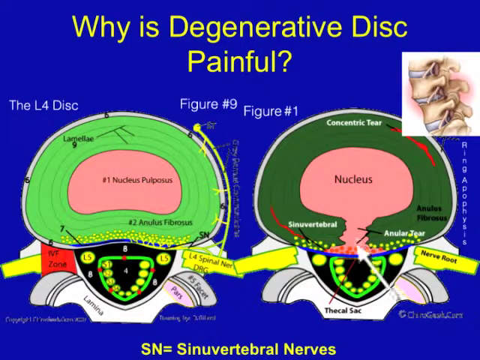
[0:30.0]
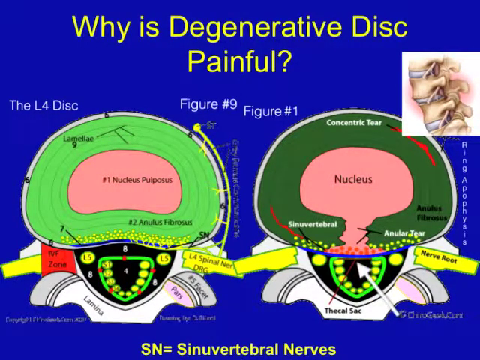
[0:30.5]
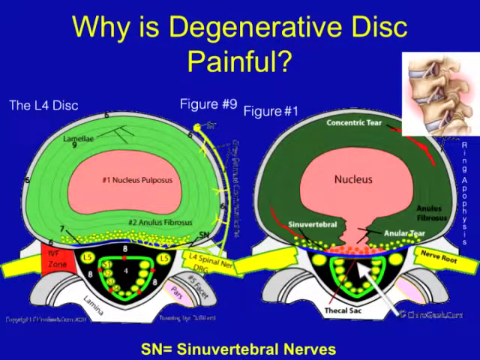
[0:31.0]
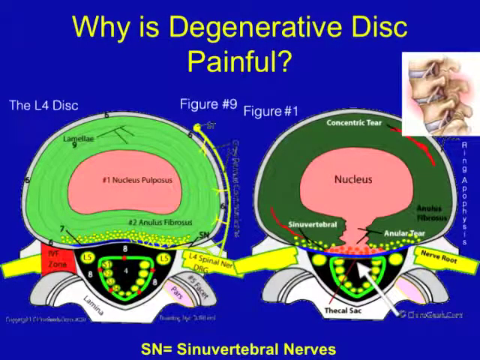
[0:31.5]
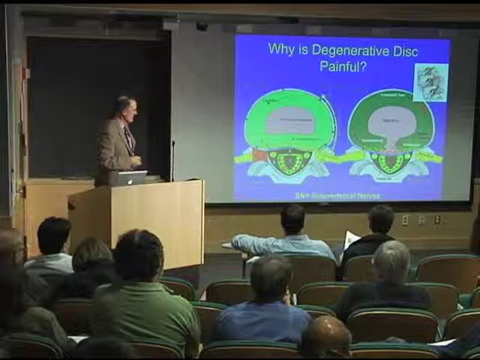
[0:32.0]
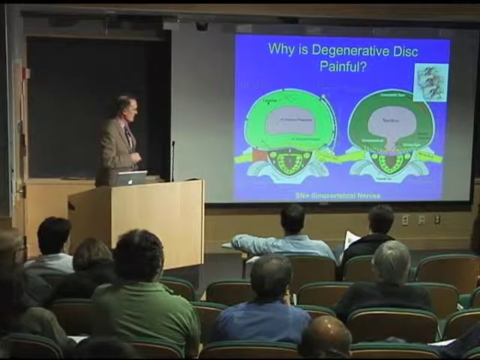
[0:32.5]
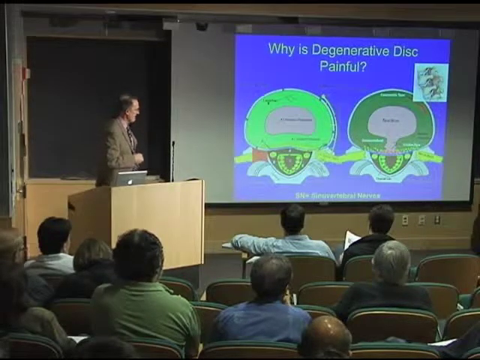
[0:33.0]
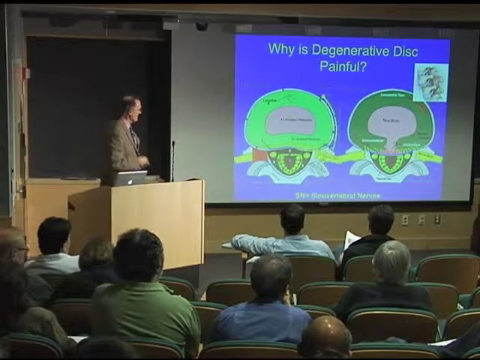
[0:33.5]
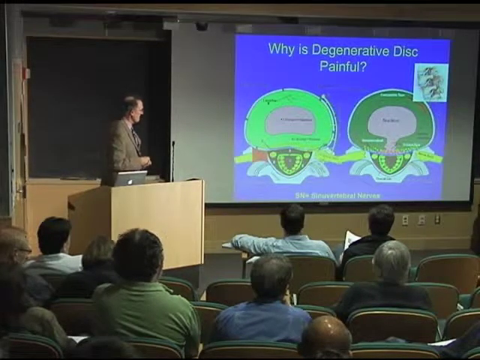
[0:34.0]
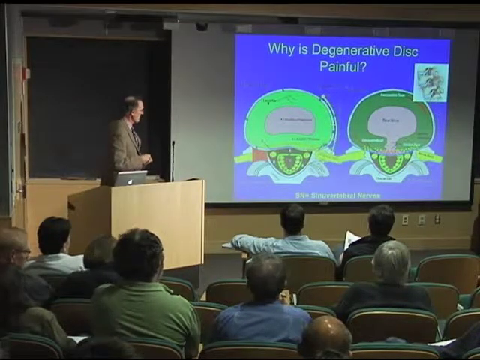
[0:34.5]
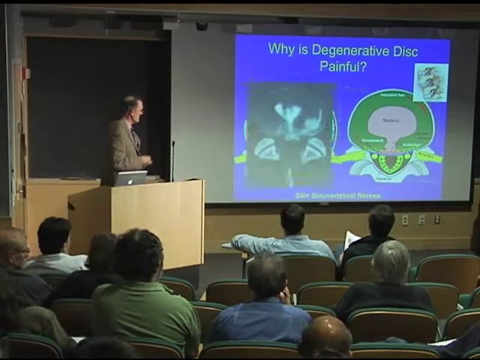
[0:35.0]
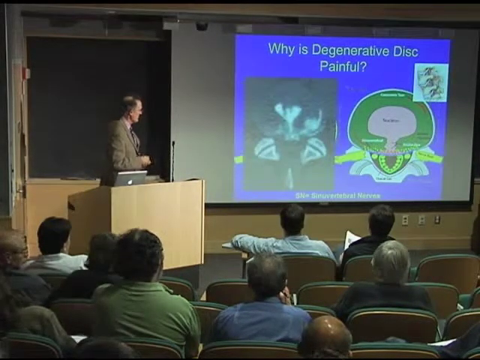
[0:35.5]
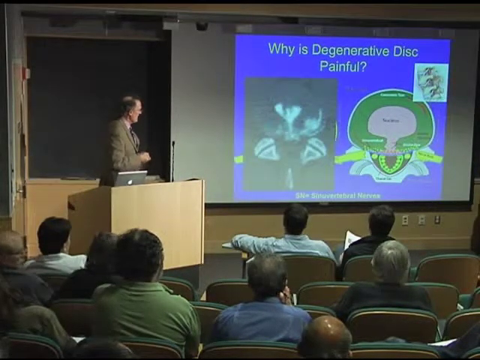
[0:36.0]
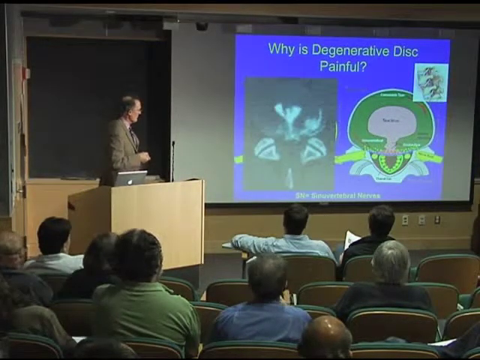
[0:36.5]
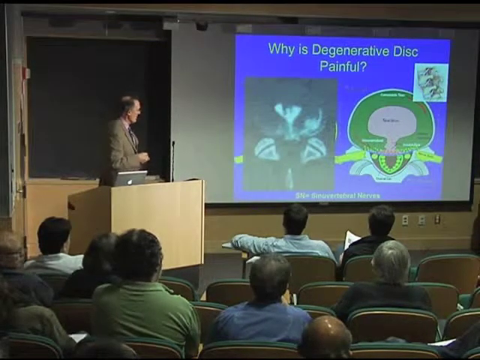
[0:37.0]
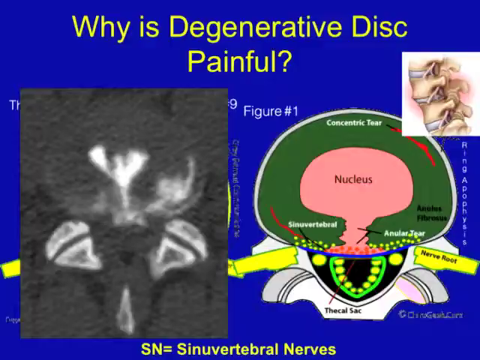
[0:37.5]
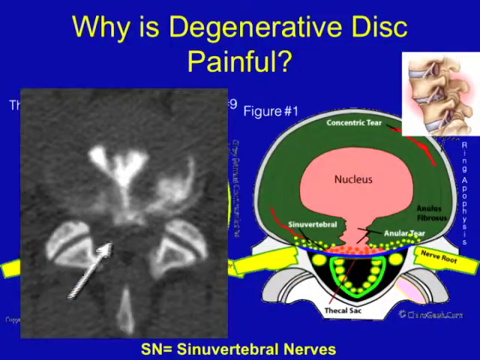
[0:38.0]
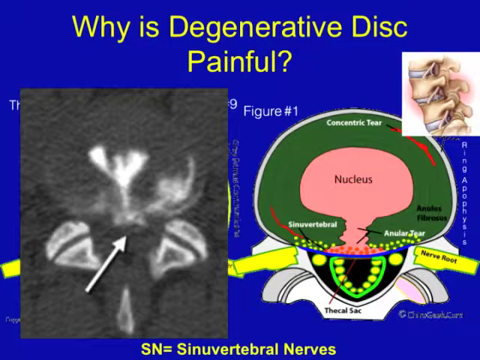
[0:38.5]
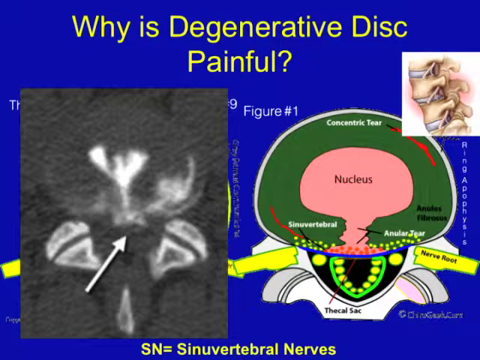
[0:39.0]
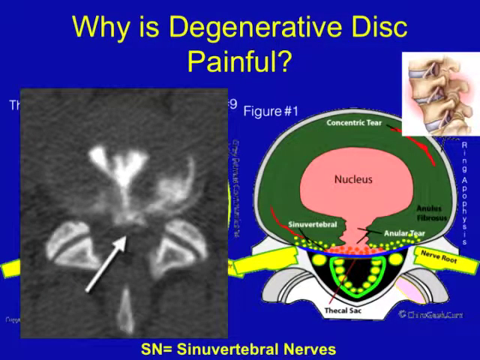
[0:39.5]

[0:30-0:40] A picture with a blue background shows figure nine and figure one in its top right-hand corner; it is on a screen, like a slide show. A picture of multiple discs in the spine follows, with three of them countable. The picture then fades to a man at a podium holding a clicker in his right hand; his hand moves up and down as he clicks. The screen then shows a grayed-out area with an arrow made of a long line and a pointed tip at the top, pointing into a grayed-out box. There are multiple white areas at the top, two small white areas on each side and another white area at the bottom, all on a gray background. The view then returns to the one seen at the beginning.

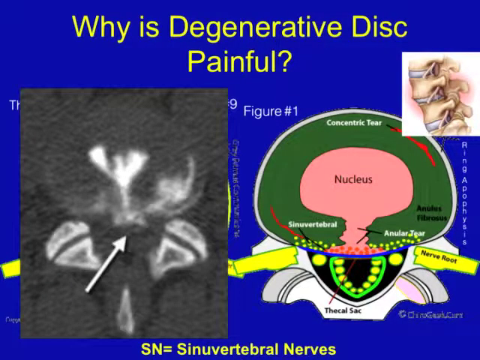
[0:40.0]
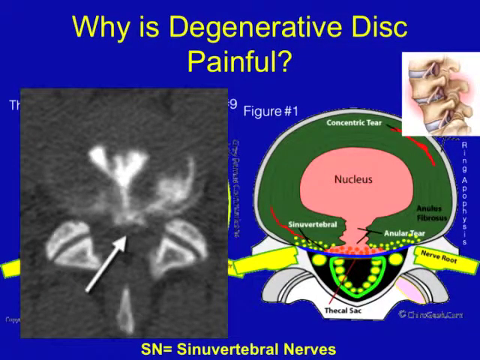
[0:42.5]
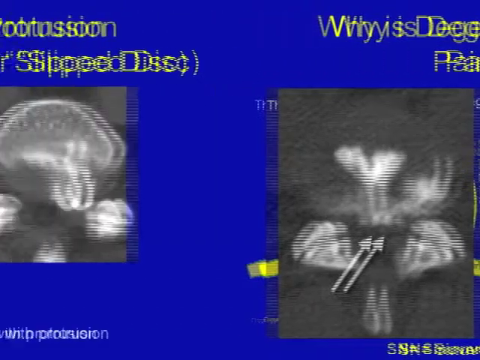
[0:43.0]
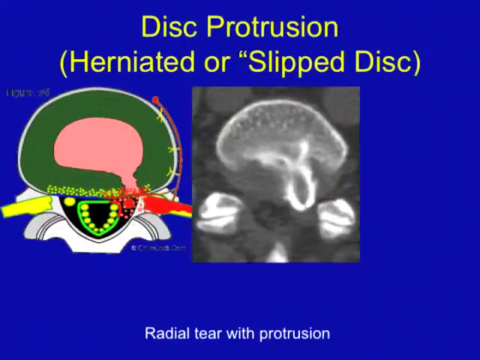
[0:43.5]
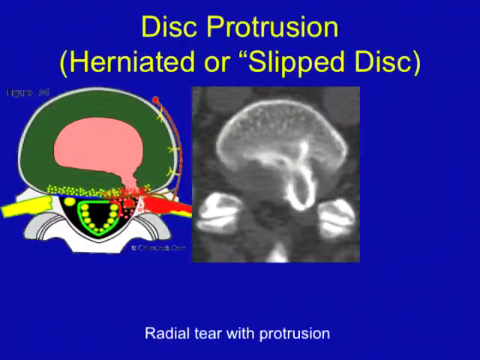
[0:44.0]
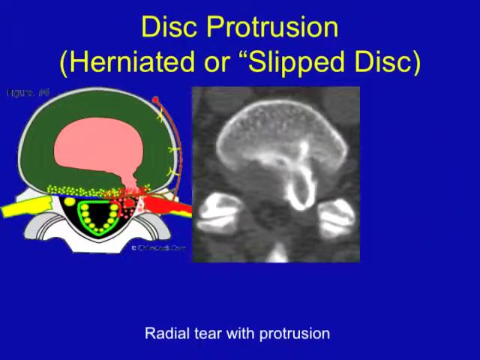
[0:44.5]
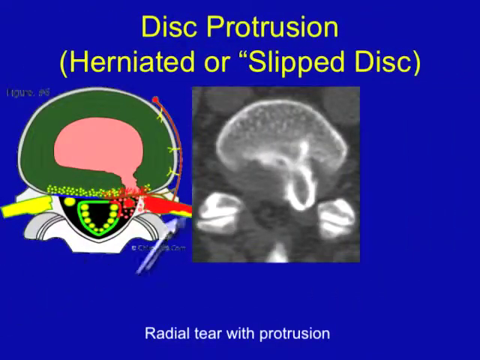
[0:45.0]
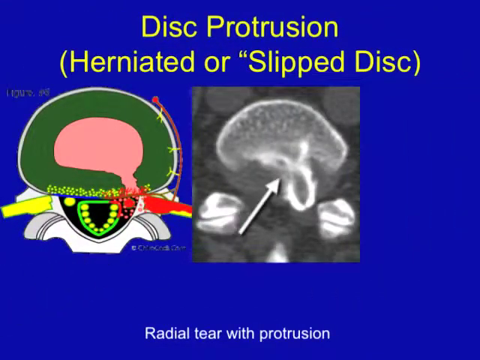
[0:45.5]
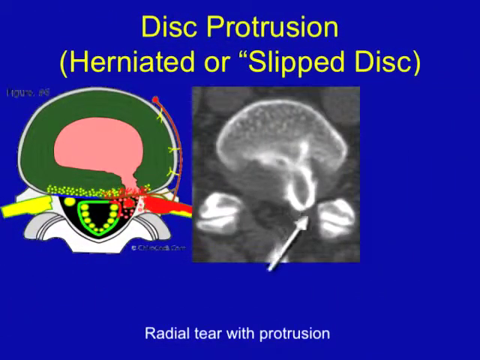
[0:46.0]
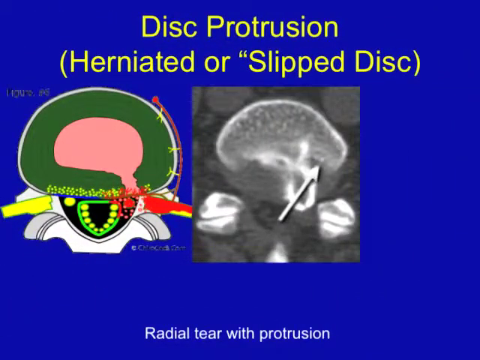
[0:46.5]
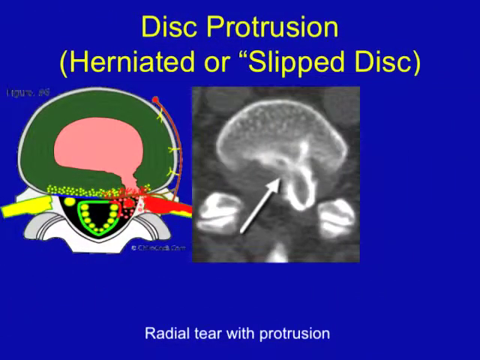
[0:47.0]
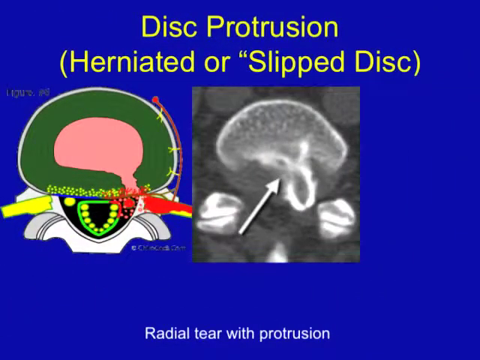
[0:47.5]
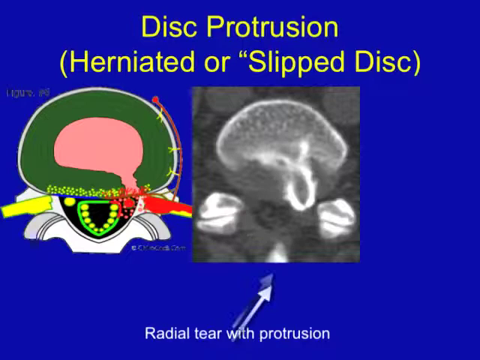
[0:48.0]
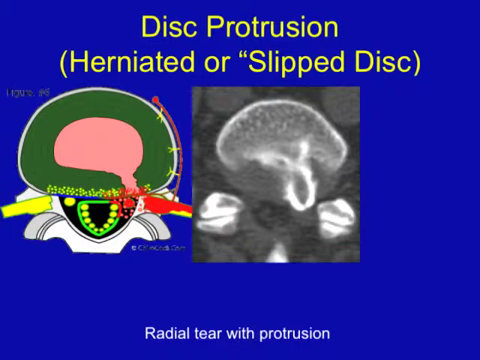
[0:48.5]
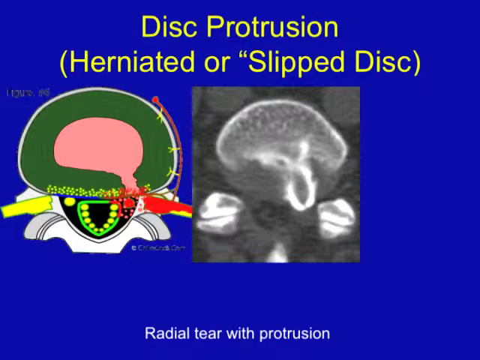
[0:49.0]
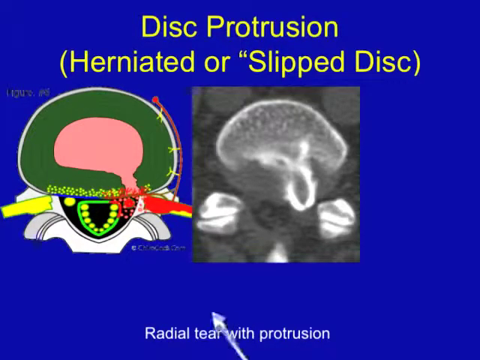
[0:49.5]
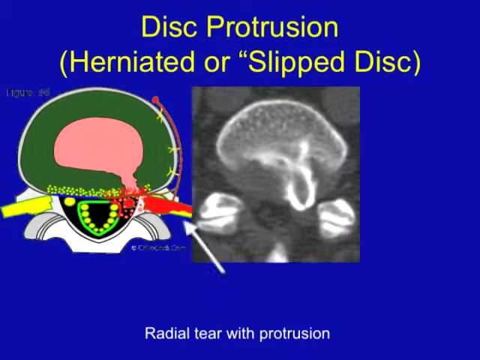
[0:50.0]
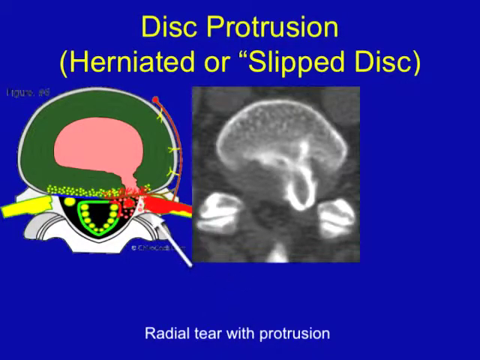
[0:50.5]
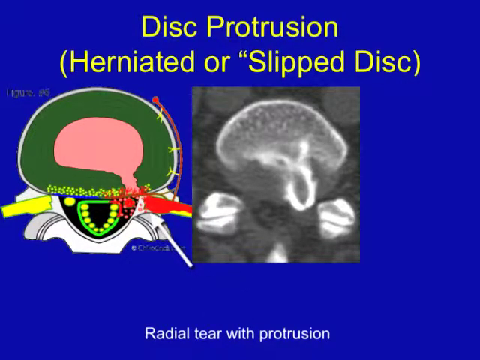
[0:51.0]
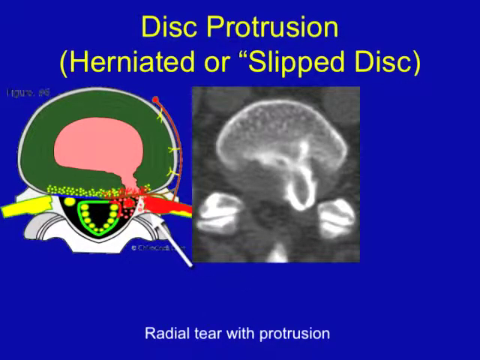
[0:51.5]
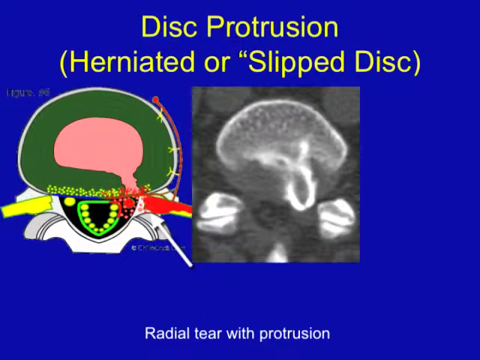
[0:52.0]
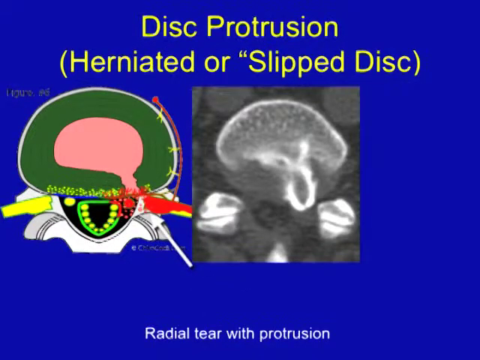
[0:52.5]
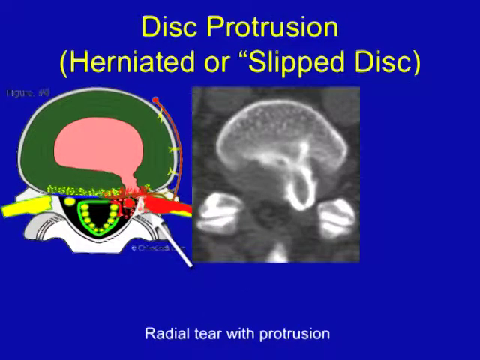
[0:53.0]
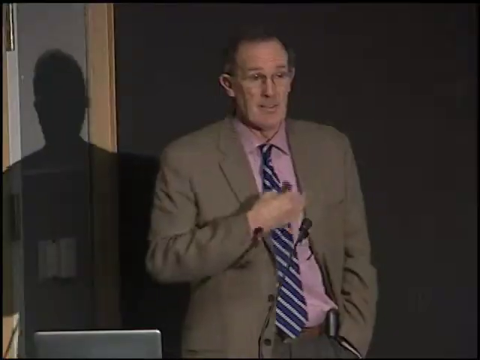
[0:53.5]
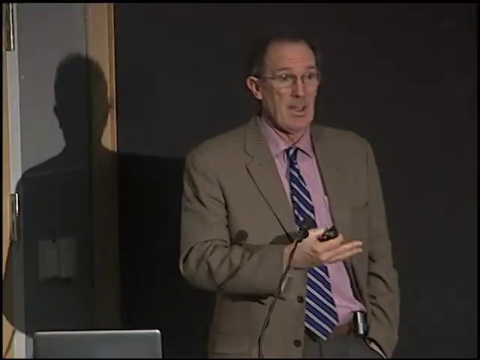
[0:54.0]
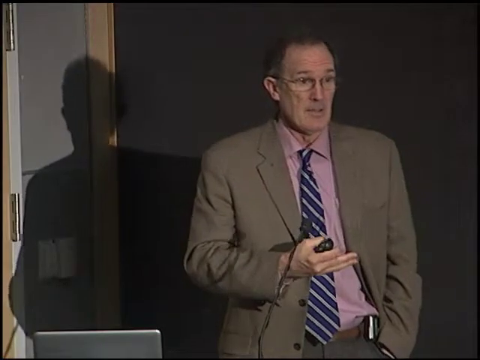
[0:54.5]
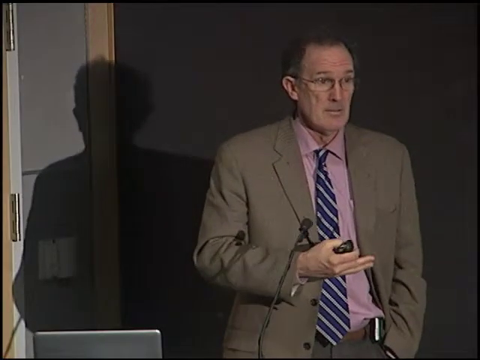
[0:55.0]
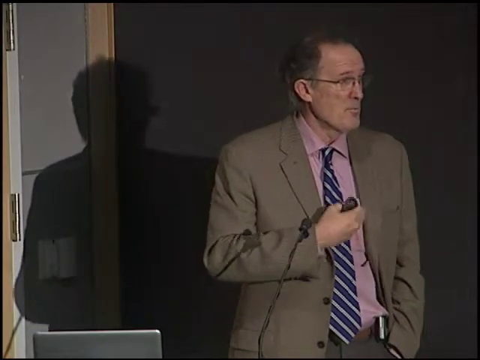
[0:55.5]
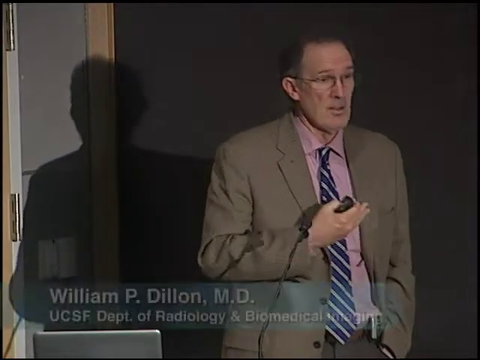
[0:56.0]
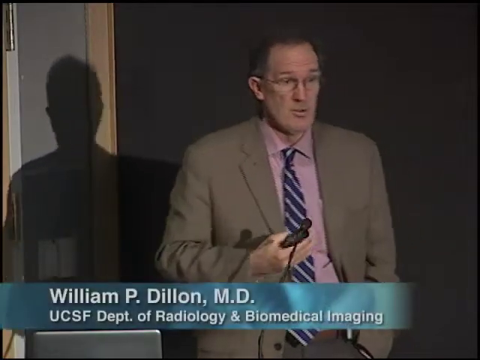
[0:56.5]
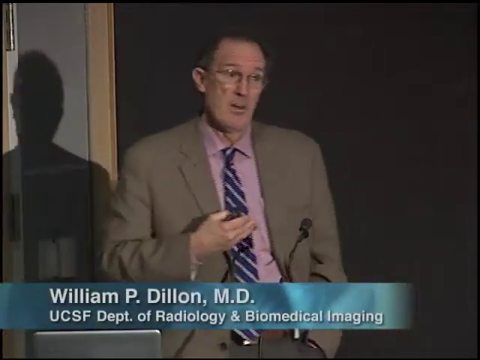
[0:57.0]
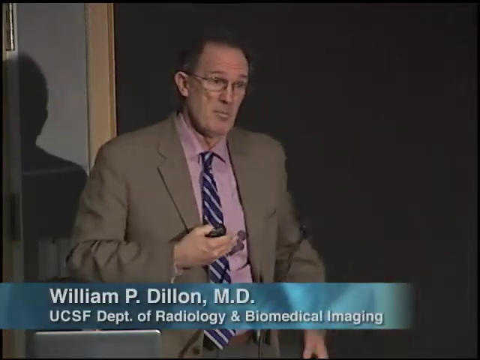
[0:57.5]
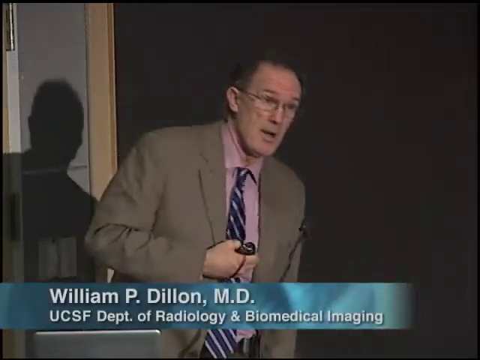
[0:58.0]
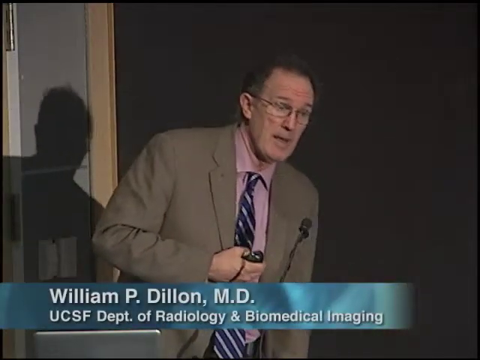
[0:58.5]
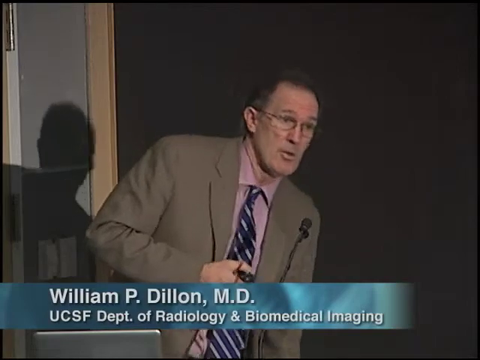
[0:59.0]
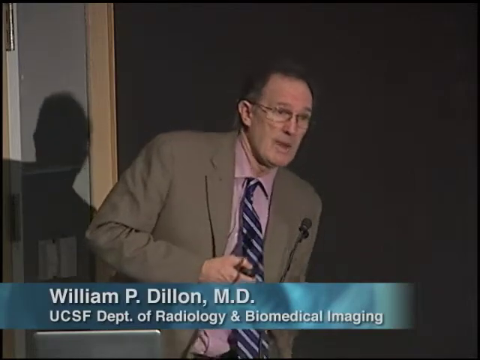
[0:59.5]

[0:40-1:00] A slide with a blue background merges to the right as another area comes up with text including "or slipped disk." There are two boxes on the blue background. The box farthest to the right, almost in the center, is like an x-ray: a gray box with lighter gray circles in it, a round object that is whiter at the top and outlined in white, a white loop coming down on each side, and some white areas like two white lines together. On the left is a drawing that looks like the top of the disk the x-ray shows, with army green going around and a pink area in the middle that comes off to the right and is open. A red line runs from the drawing over to the x-ray, and one large arrow points up toward that red area. Below the army green, in the middle, is a green semi-triangular area on a black surface, with multiple little yellow dots at the bottom and sides of the triangle.